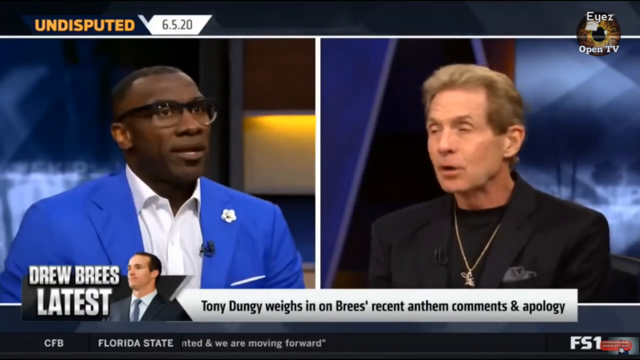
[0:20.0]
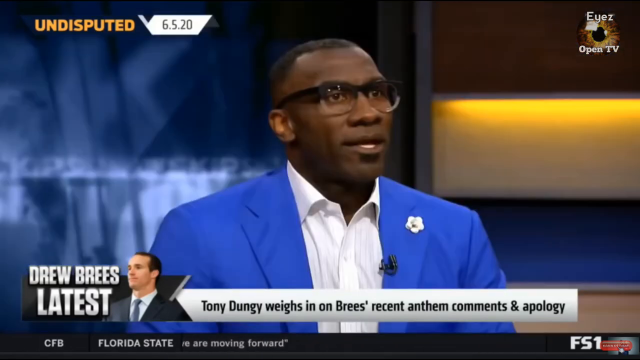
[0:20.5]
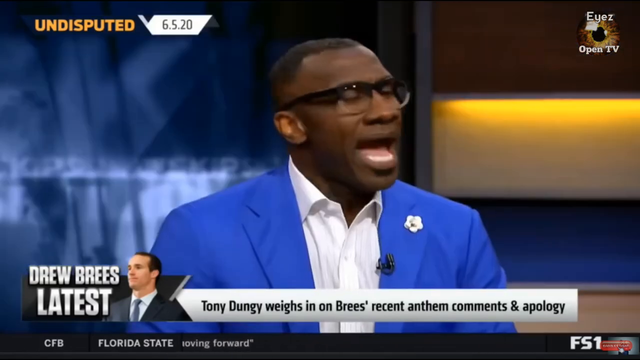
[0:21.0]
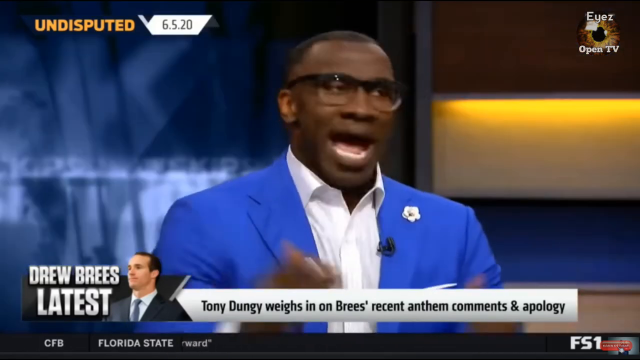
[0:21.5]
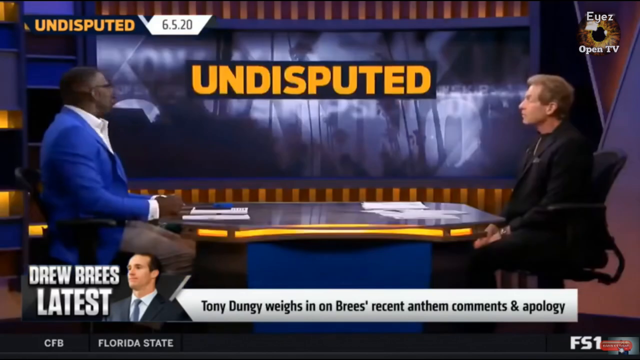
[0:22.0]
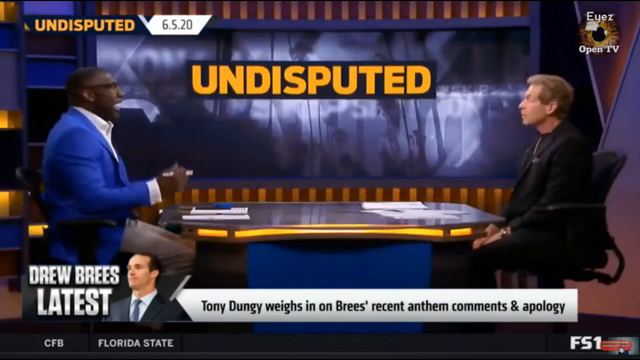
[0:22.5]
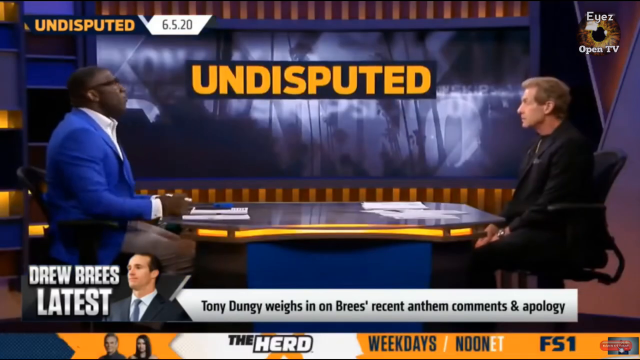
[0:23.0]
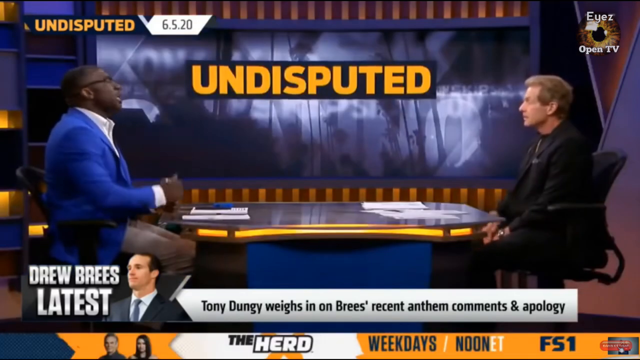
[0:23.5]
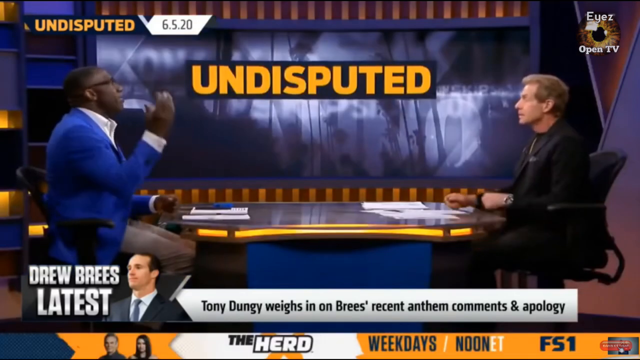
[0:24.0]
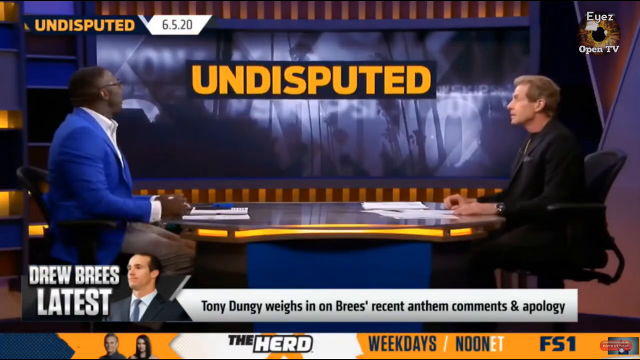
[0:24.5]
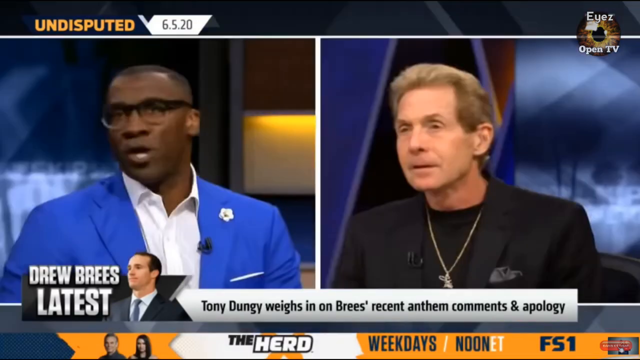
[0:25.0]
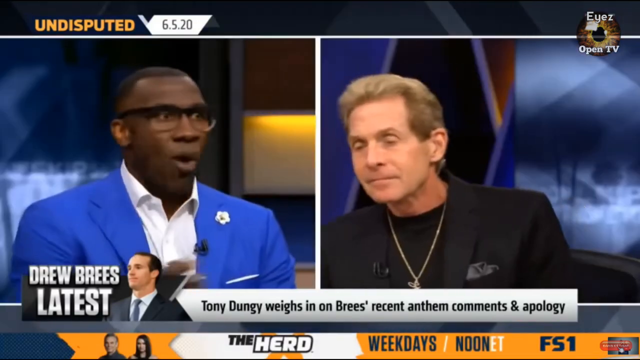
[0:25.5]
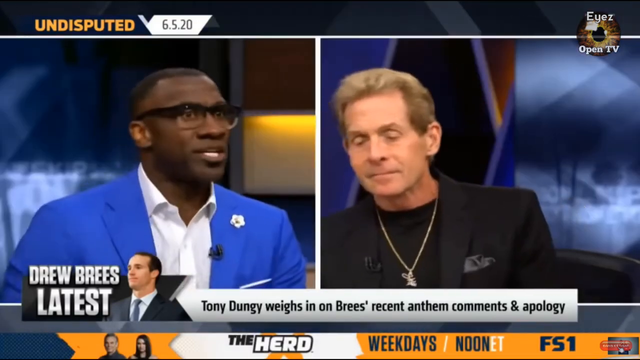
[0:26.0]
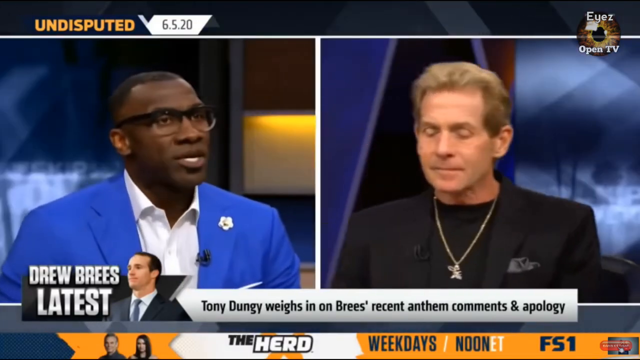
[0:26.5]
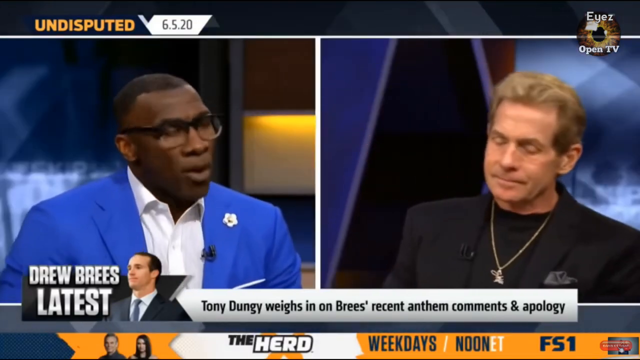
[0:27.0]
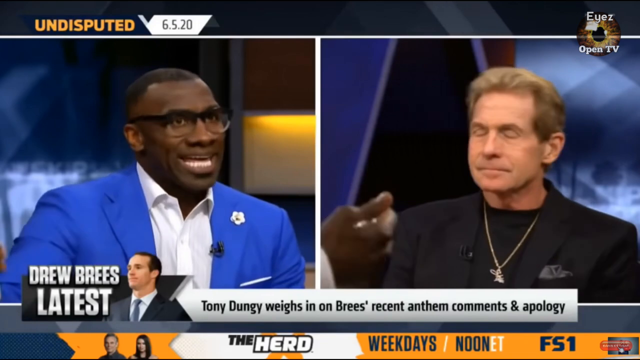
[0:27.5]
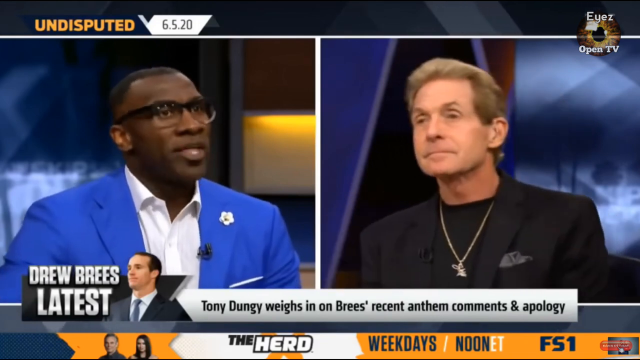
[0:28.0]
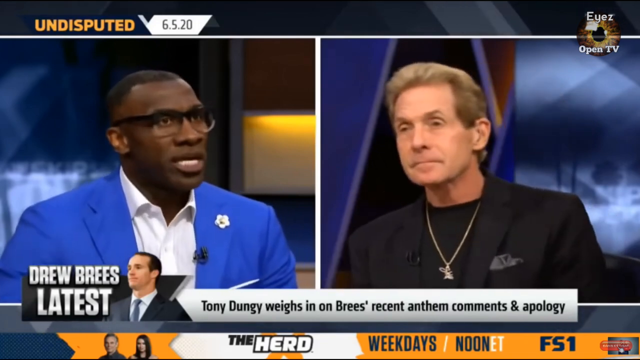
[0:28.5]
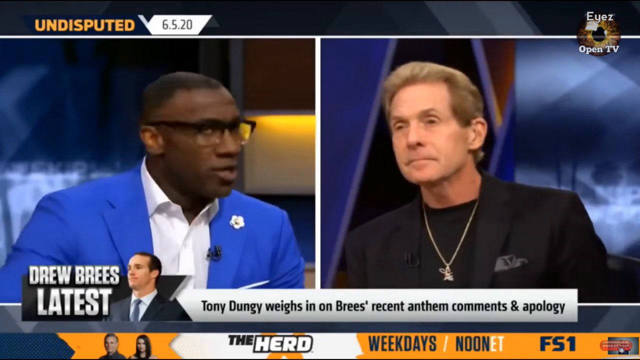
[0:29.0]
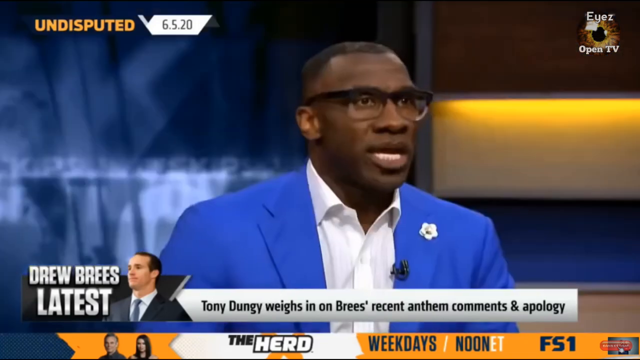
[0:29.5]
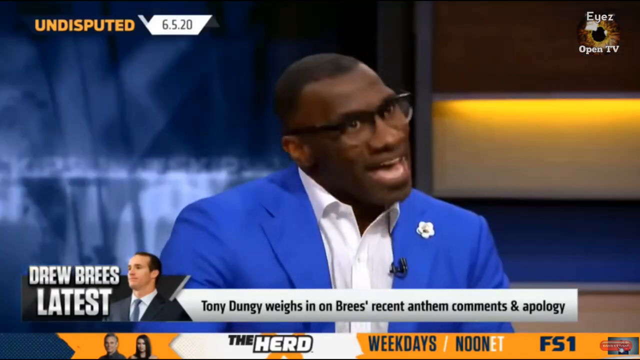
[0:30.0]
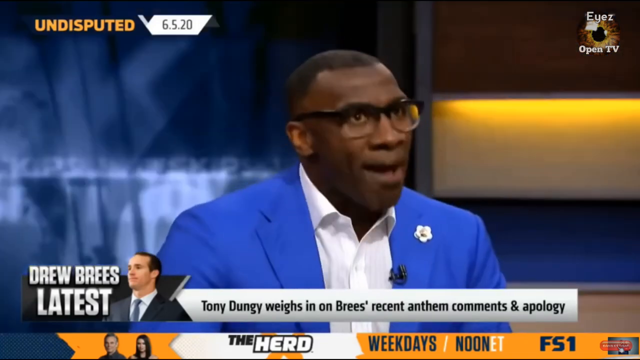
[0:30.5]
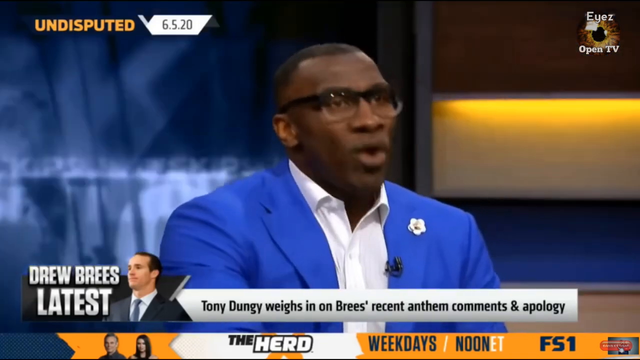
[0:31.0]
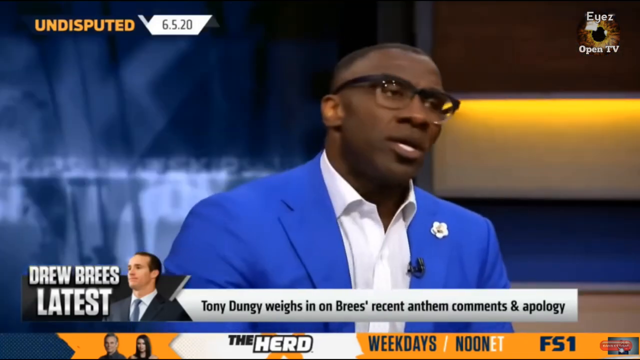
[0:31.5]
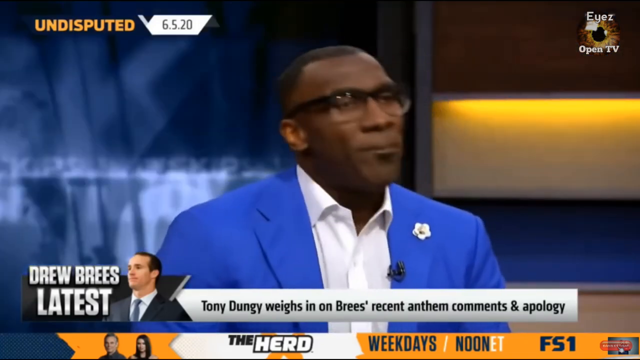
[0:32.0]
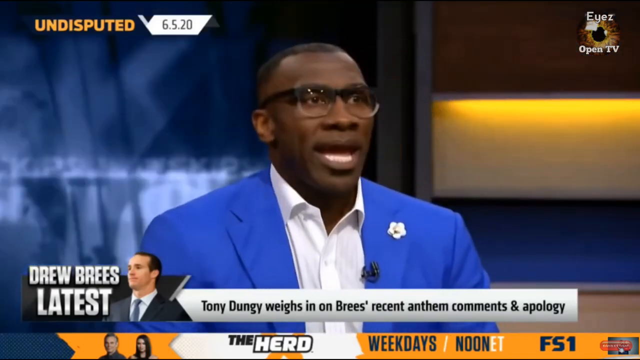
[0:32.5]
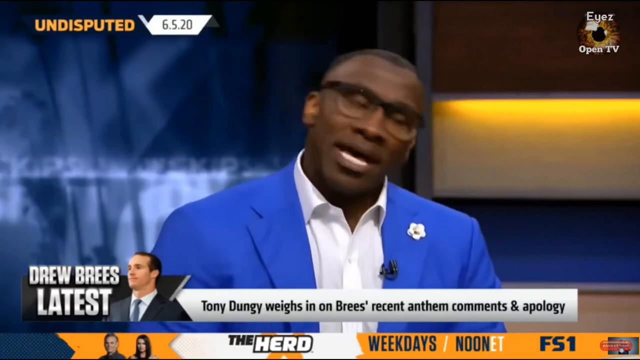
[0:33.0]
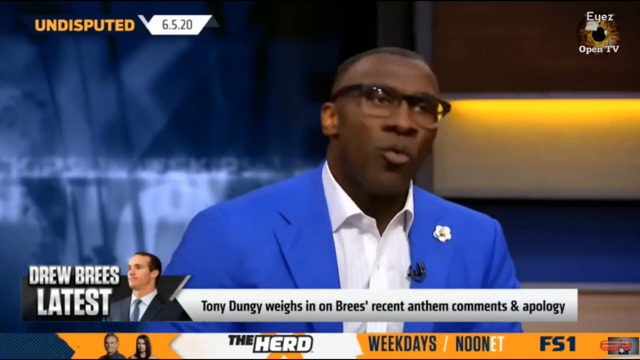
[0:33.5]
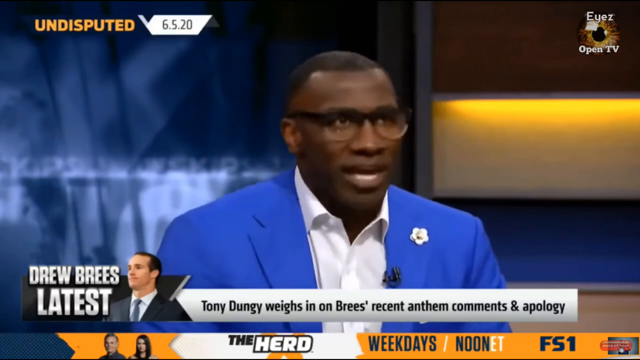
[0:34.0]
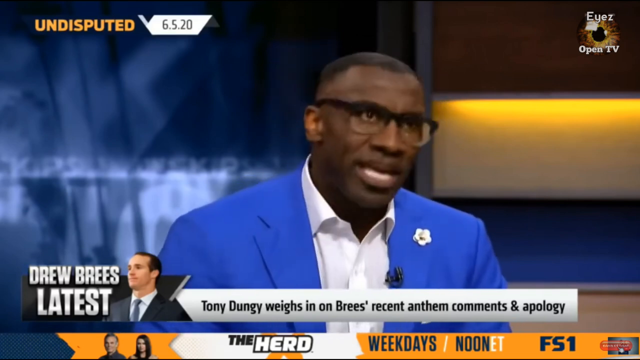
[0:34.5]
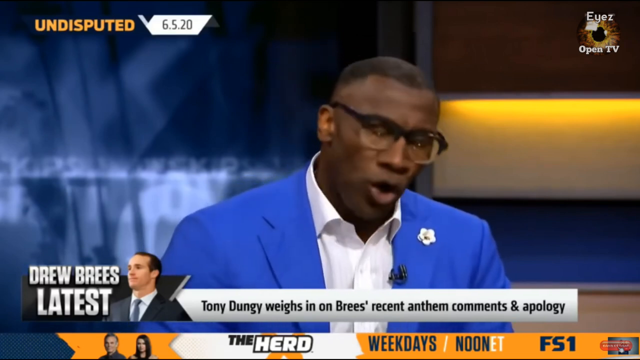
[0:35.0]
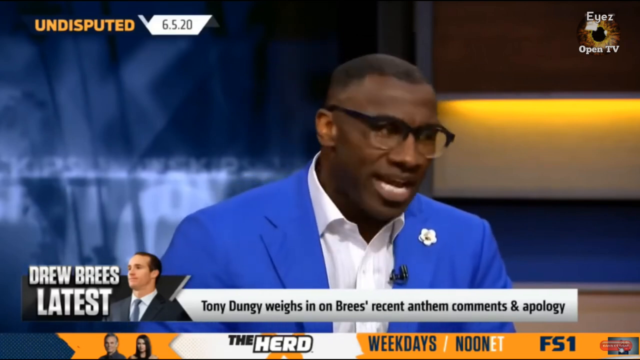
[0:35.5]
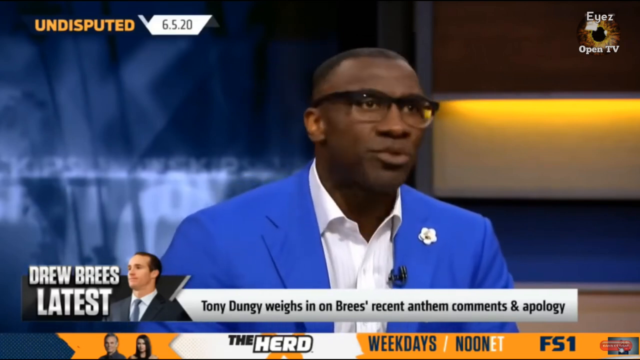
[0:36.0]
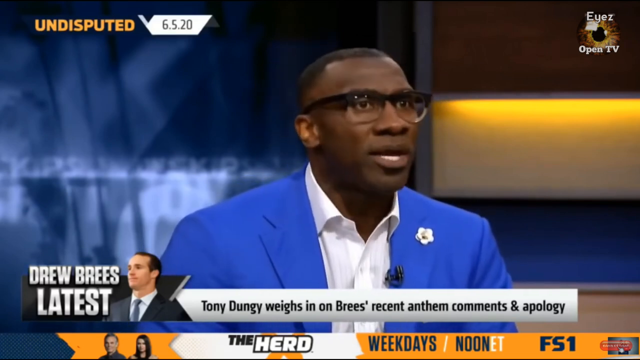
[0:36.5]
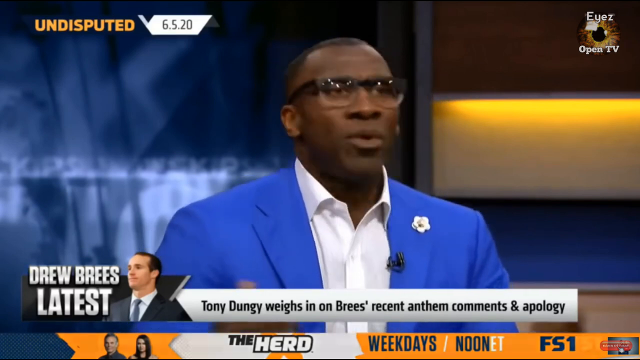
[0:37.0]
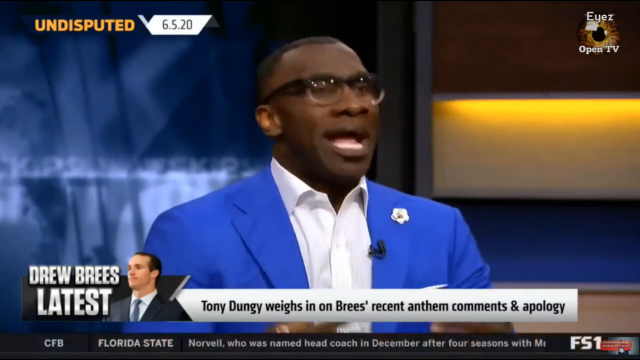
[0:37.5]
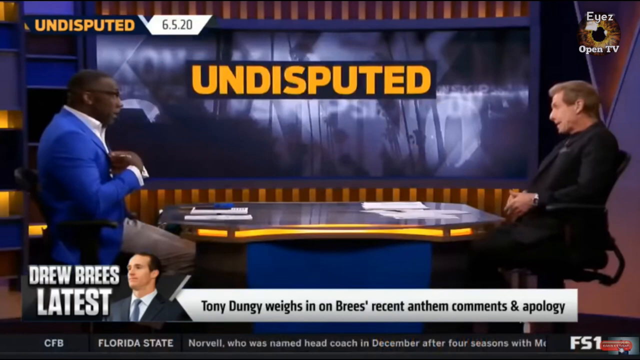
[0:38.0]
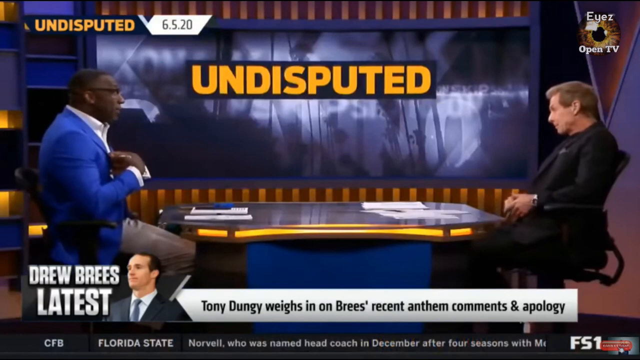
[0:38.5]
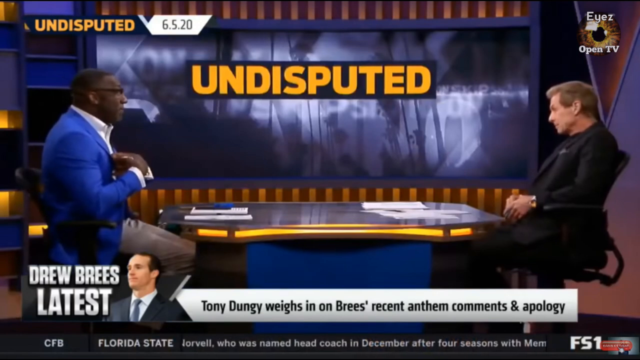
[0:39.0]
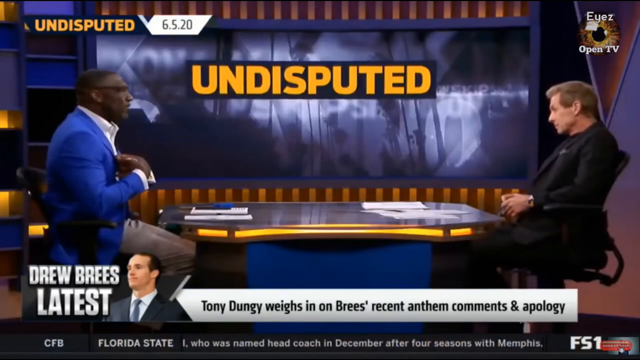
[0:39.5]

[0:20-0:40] In the upper left-hand corner, "Undisputed" appears in orange, with a white and blue background beside it carrying "6.5.20" in black. In the far upper right-hand corner is "Eyez", spelled E-Y-E-Z, followed by "Open TV". At the bottom, "Drew Brees Latest" appears with an image of a white man in a blue tie, and next to it, in black font on a white background, is text beginning "Tony Dungy weighs in on the Brees' recent anthem". Shannon Sharp looks very animated: he shakes his head and uses his hand to move his head. A small flower is pinned to his blazer. He seems somewhat bothered rather than happily excited, as if something has annoyed him. The other man says nothing.